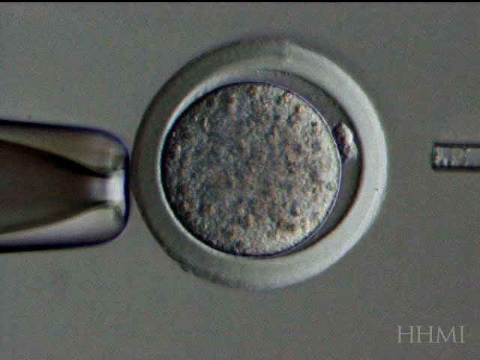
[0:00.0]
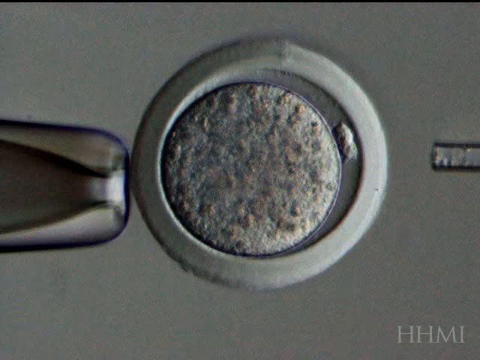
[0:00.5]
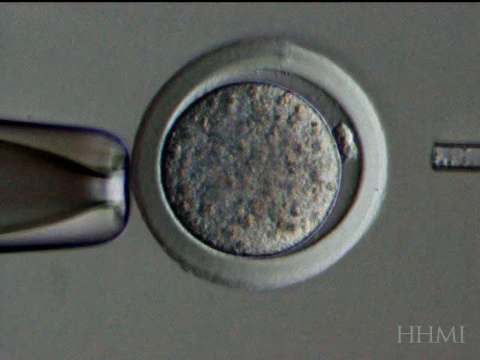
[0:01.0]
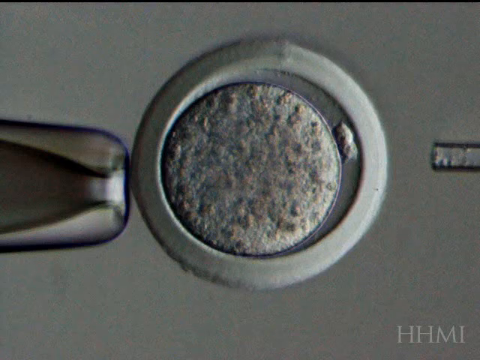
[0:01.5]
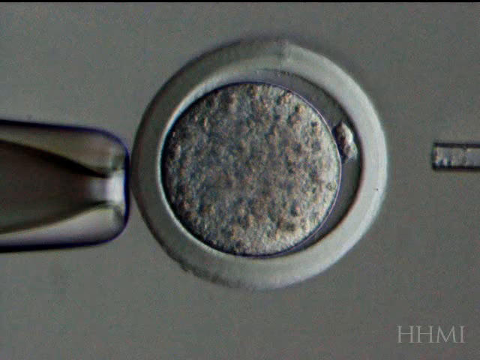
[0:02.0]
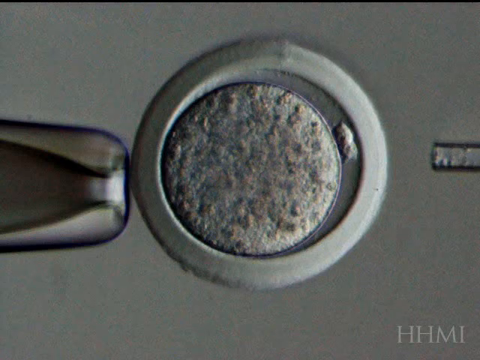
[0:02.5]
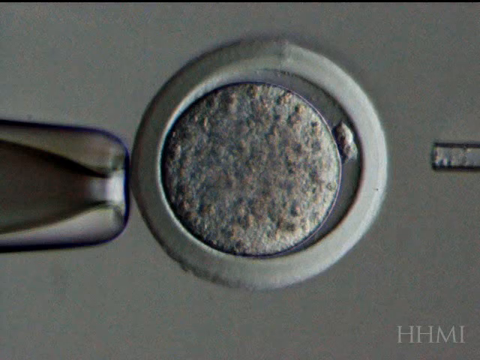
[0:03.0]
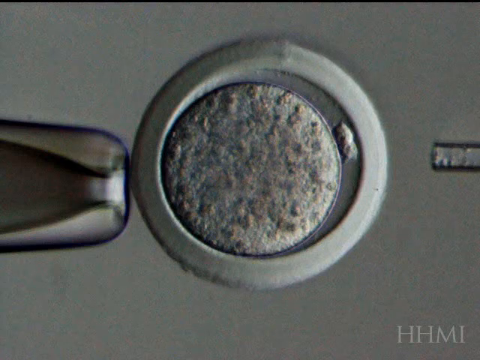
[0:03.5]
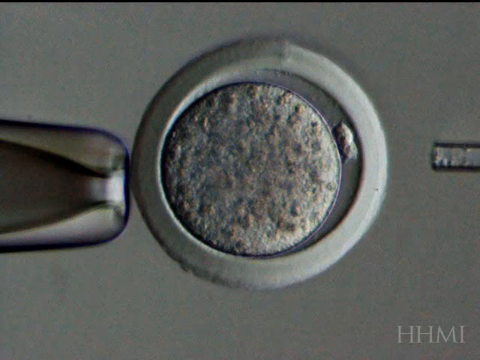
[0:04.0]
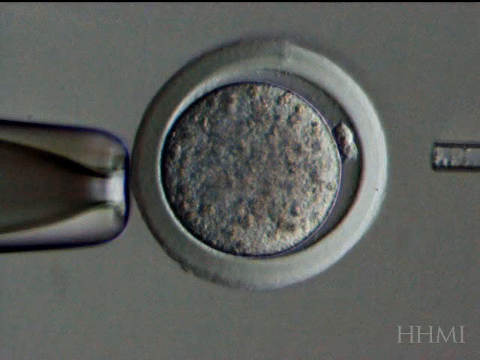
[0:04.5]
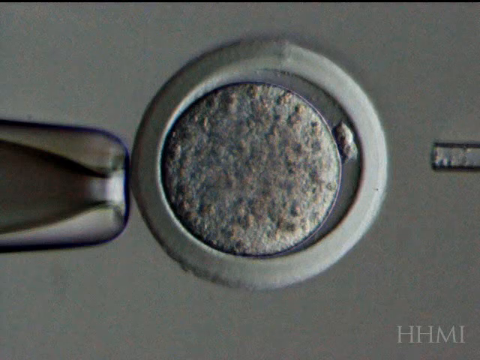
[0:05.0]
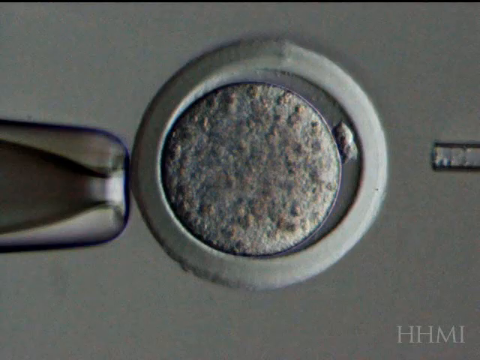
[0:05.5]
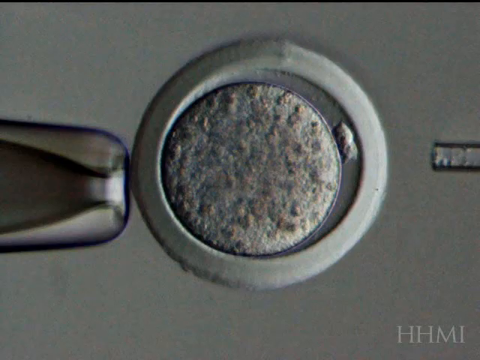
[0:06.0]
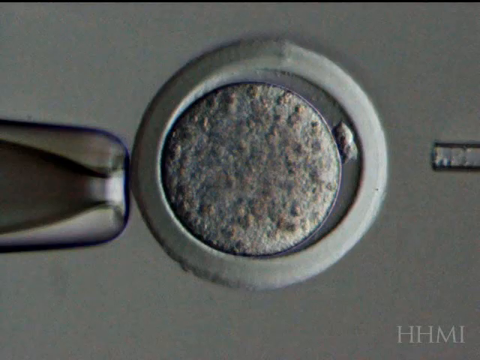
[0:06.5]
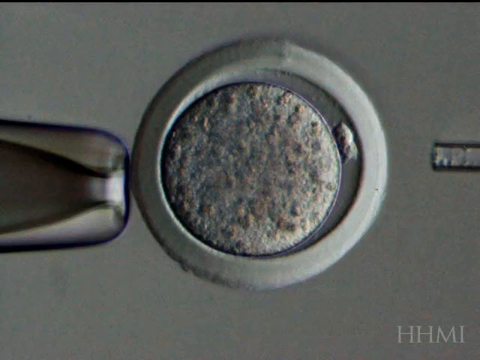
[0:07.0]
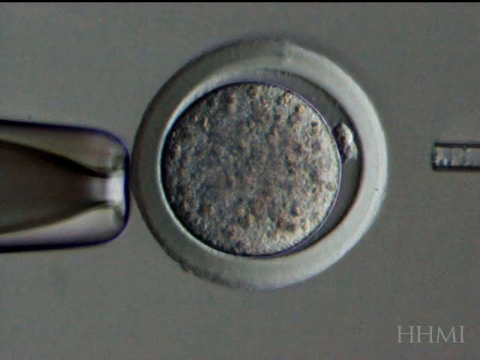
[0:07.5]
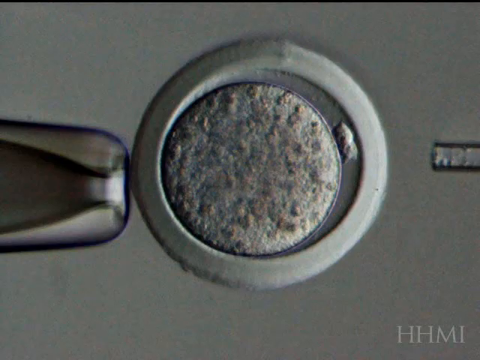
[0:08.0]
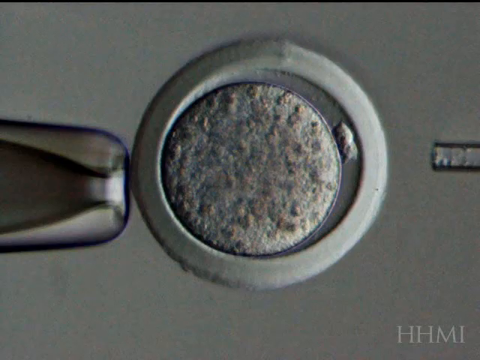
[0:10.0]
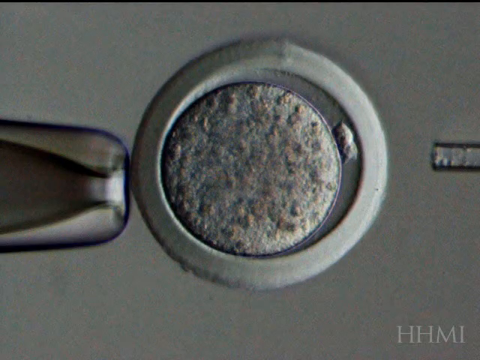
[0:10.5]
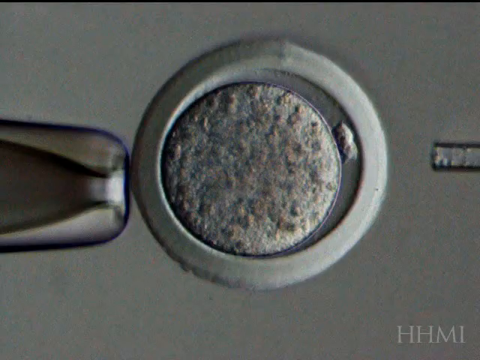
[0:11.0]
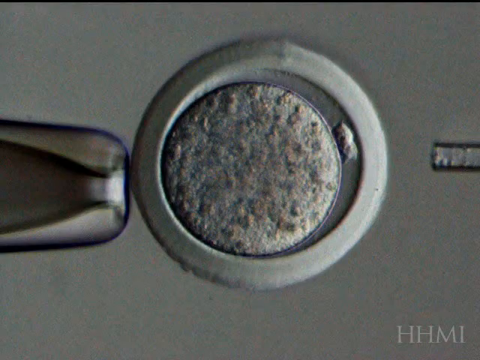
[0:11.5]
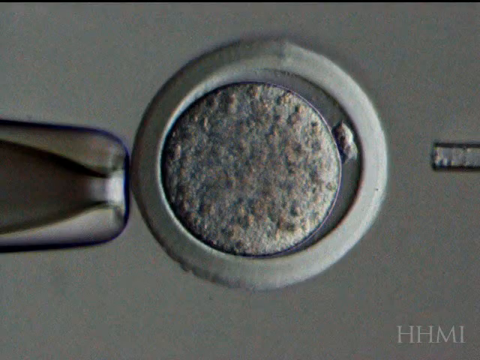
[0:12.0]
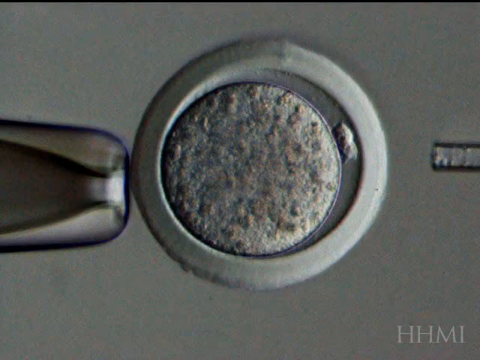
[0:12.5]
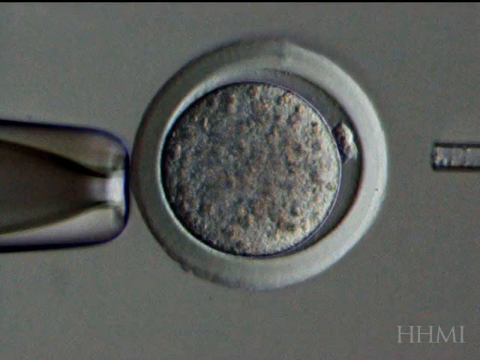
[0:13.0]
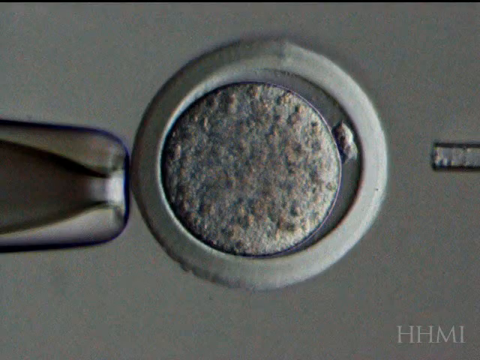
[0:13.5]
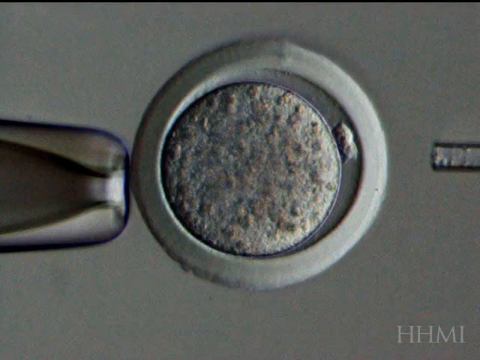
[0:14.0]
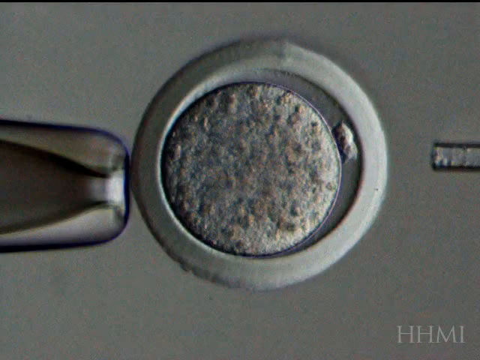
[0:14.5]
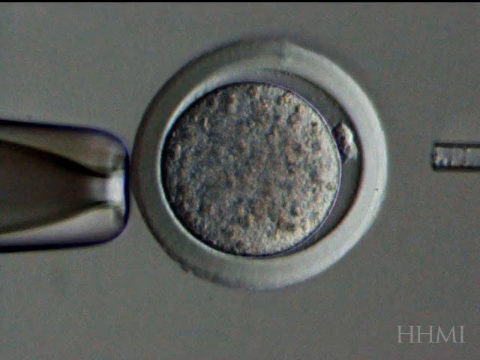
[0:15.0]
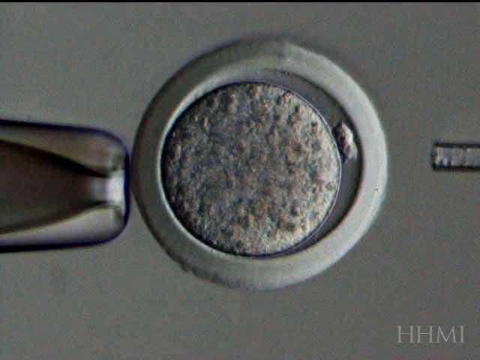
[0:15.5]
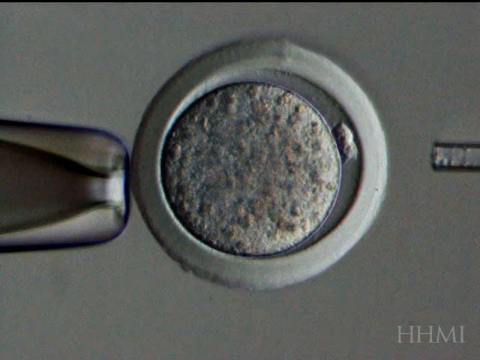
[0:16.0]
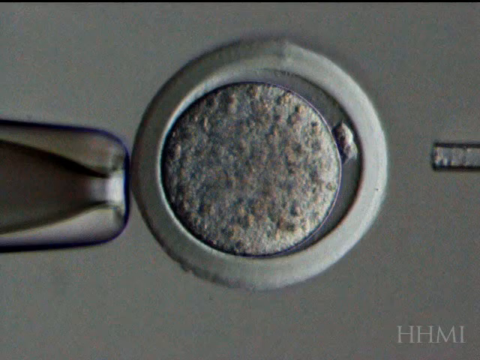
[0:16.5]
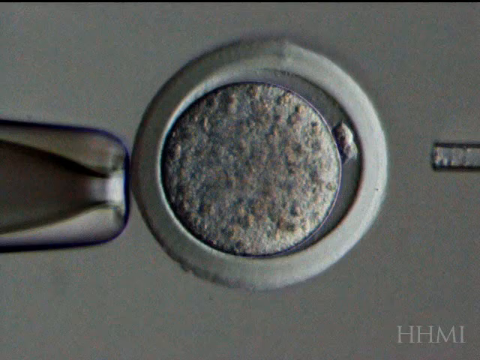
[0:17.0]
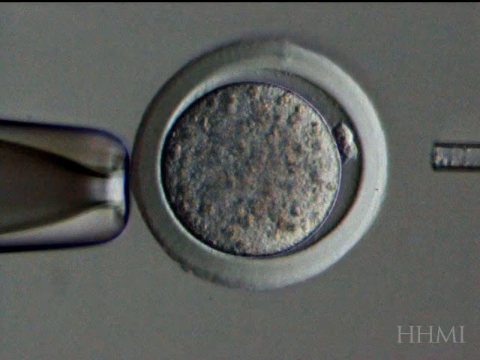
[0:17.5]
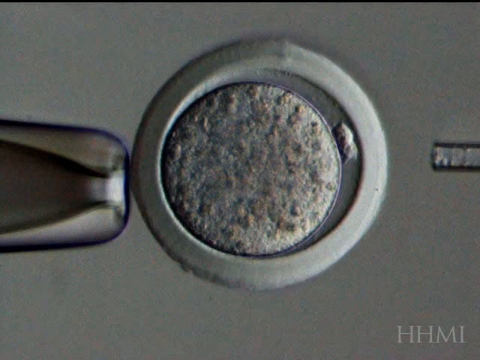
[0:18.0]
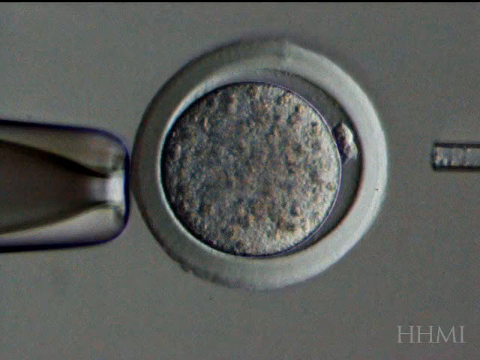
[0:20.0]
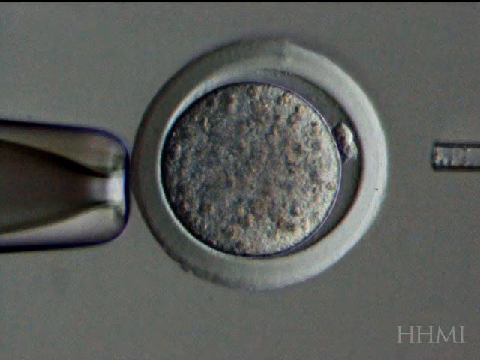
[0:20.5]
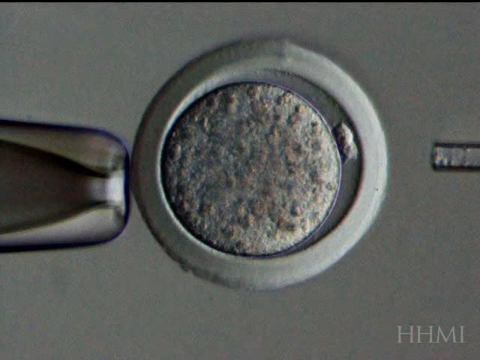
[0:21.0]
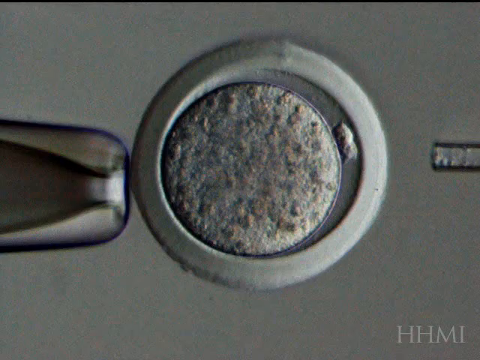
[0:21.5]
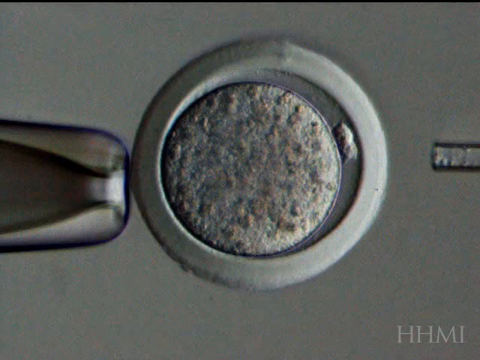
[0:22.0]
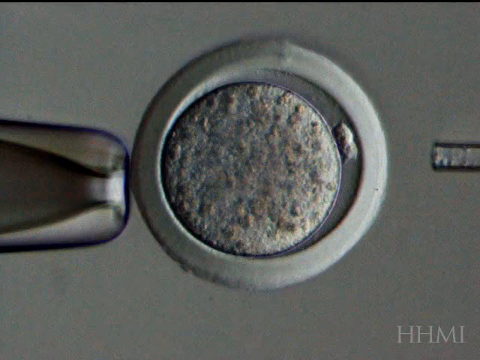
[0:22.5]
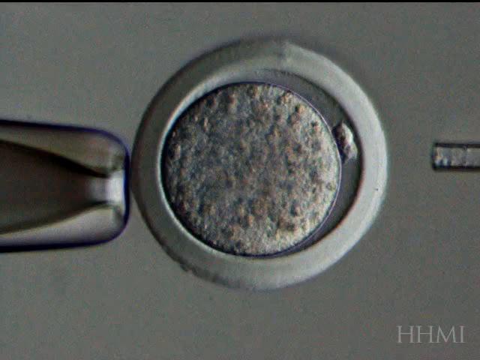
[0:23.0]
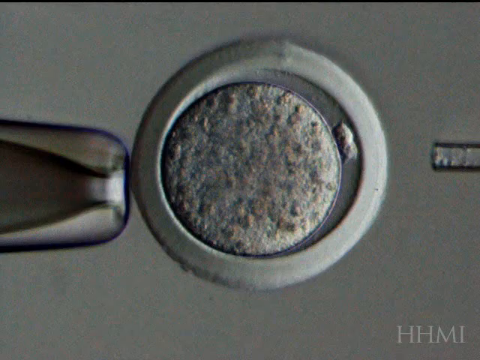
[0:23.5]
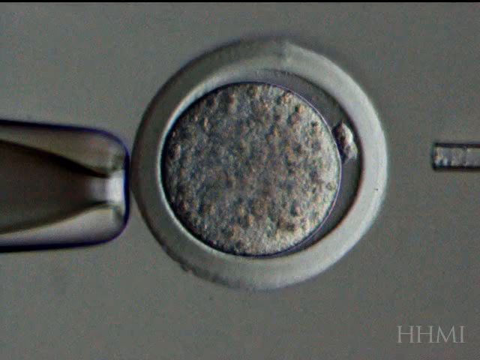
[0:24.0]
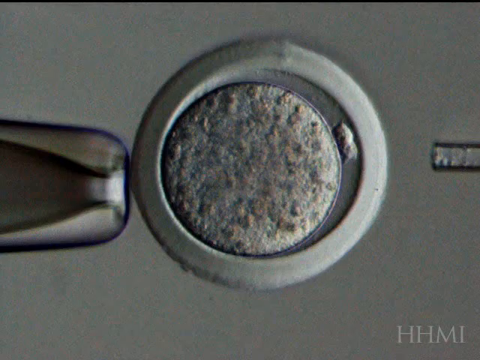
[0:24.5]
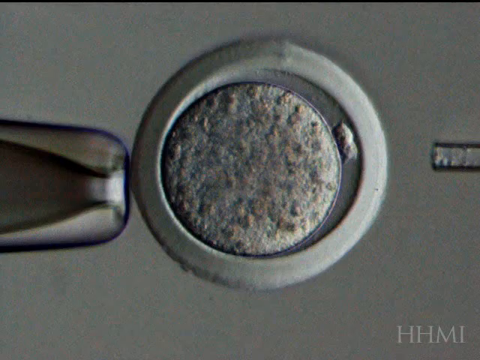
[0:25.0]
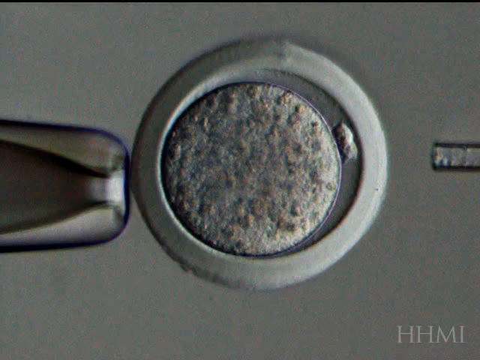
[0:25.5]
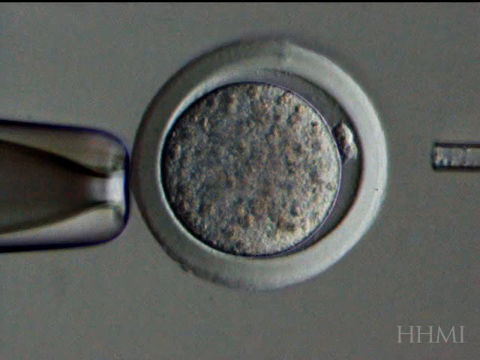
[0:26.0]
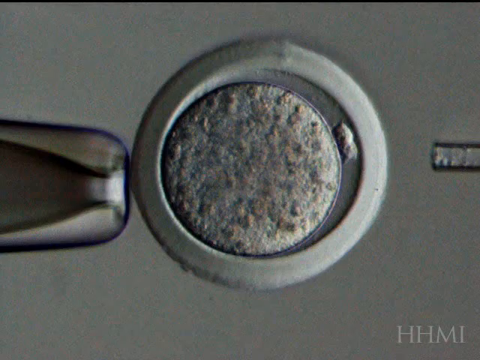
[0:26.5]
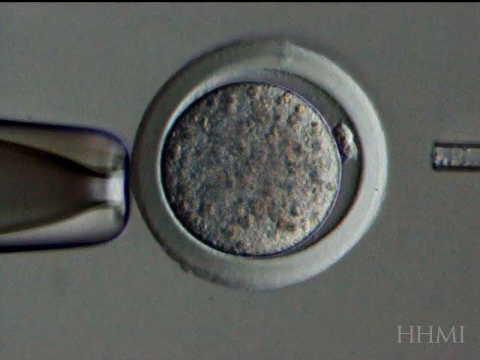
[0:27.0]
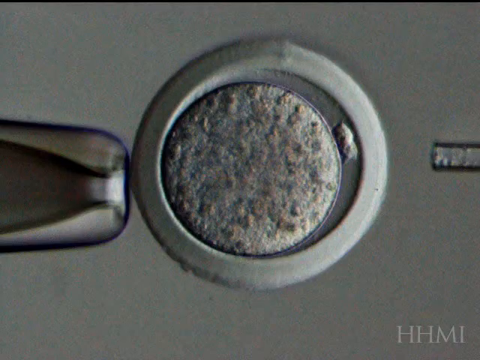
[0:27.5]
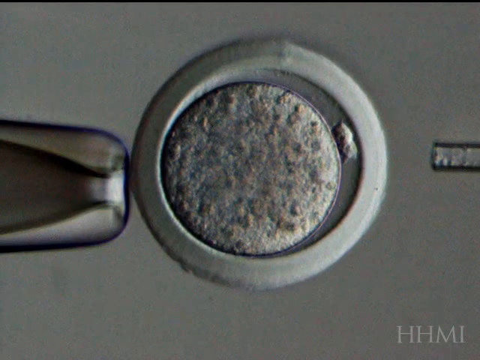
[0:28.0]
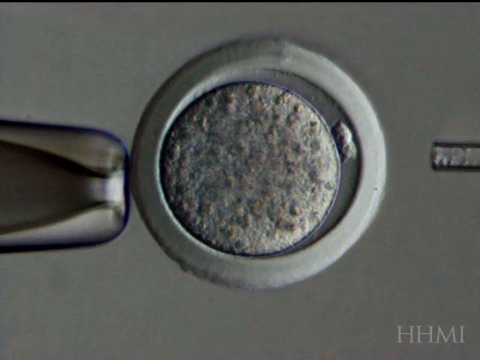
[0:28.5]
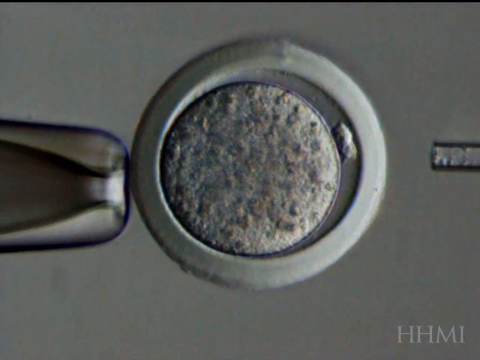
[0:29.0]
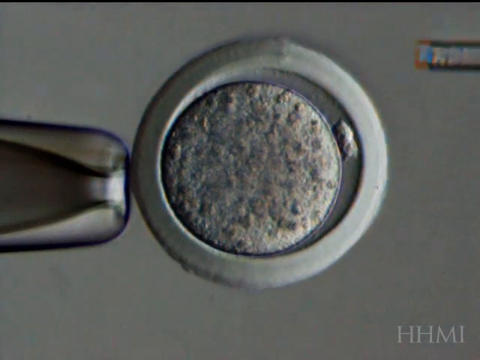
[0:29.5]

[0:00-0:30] The frame is mostly gray and appears to be under some sort of microscope, as it is extremely zoomed in. A gray metallic ring is in the middle, and inside the ring is a small-looking dish with some gray-looking powder that fades from black to a grayish color to a lighter color on the right. What looks like a metal tip is on the left of the screen. The image stays mostly stable for a few seconds until the very end, when the metal tip seems to move slightly, and as it moves, the metal ring also moves. On the right is another object, rectangular, with slight shadows on its top and bottom, and the metal tip on the left almost looks like it is poking it. Once it starts to move, the object on the right looks almost translucent, like glass. A small bump outside the inner circle but inside the outer circle looks like an overgrowth of the substance inside the inner circle.